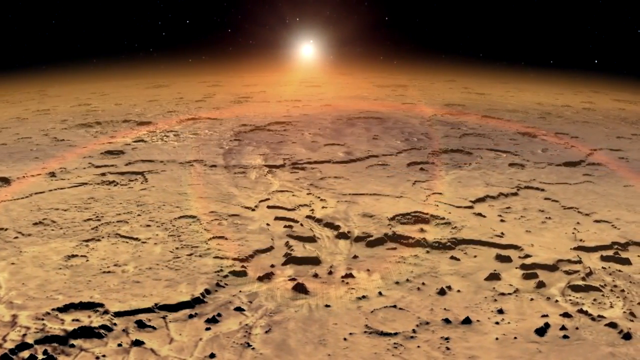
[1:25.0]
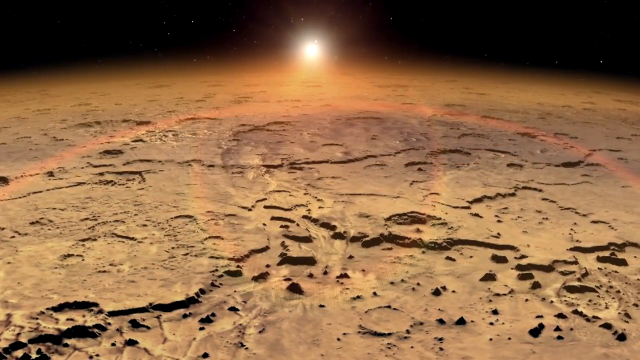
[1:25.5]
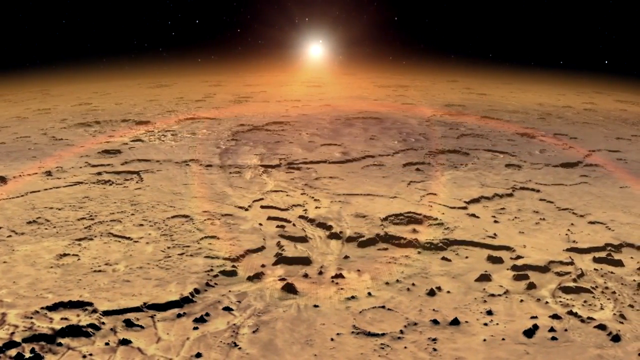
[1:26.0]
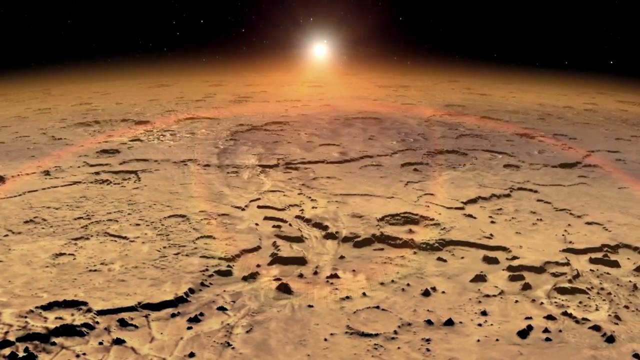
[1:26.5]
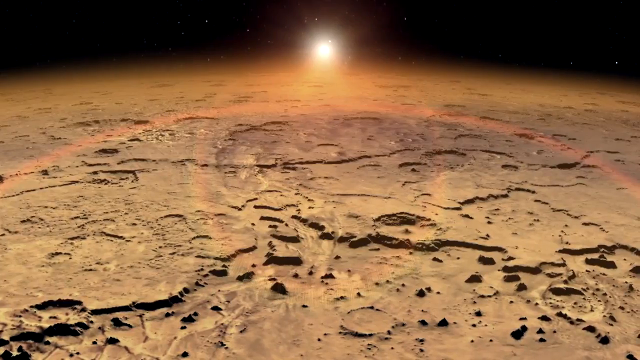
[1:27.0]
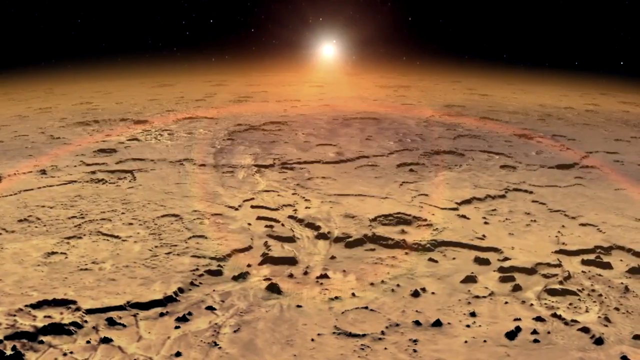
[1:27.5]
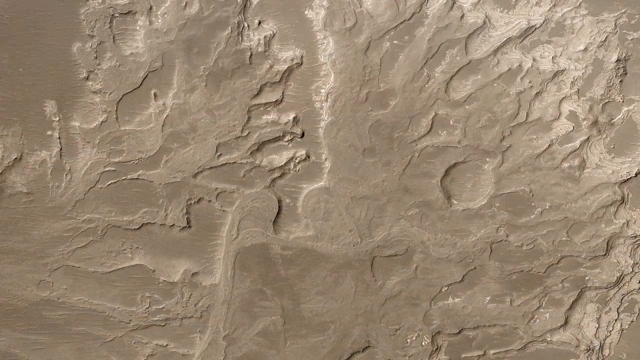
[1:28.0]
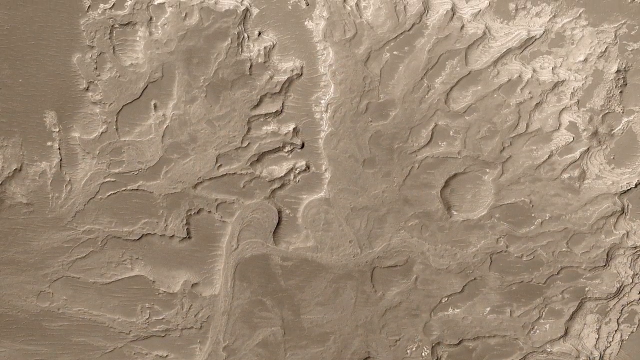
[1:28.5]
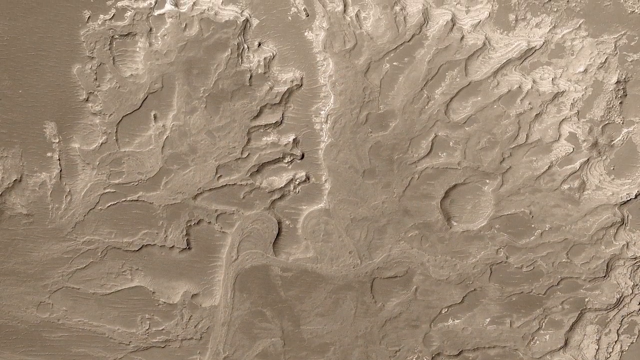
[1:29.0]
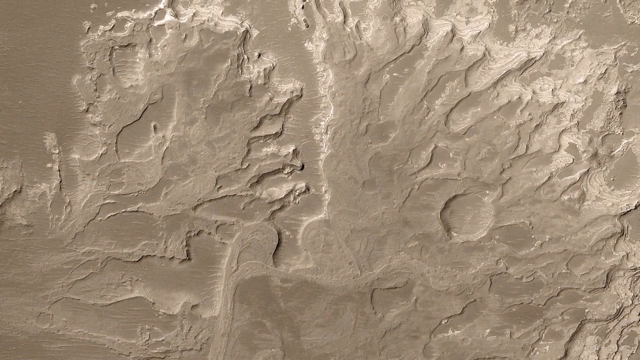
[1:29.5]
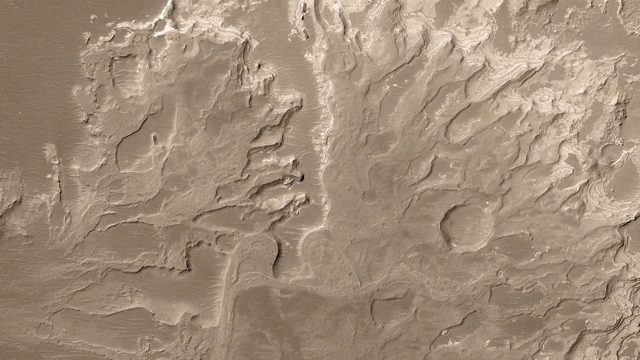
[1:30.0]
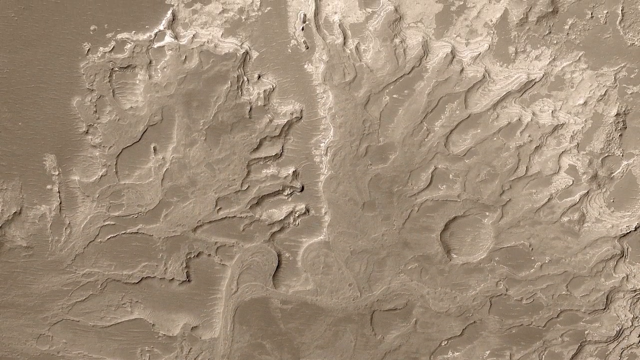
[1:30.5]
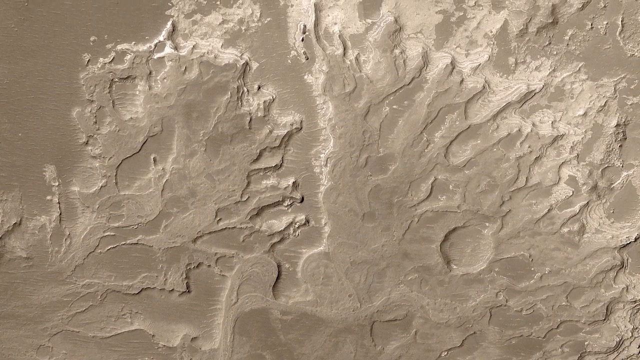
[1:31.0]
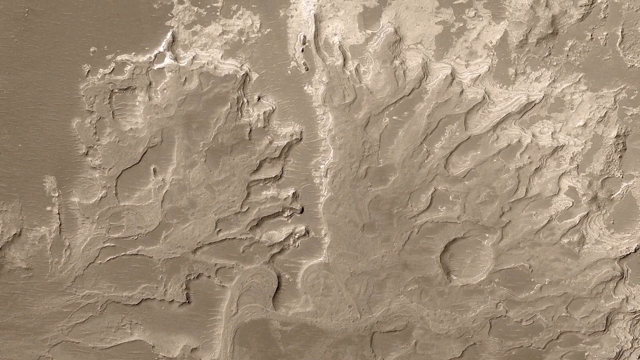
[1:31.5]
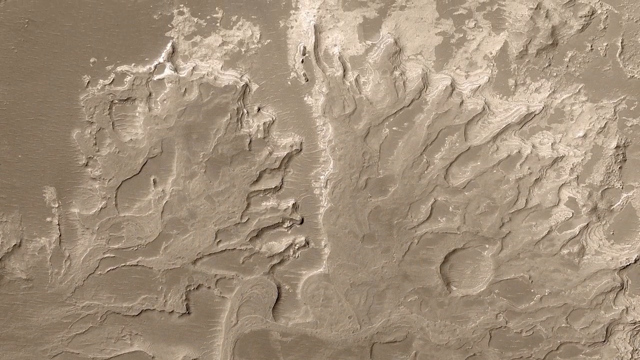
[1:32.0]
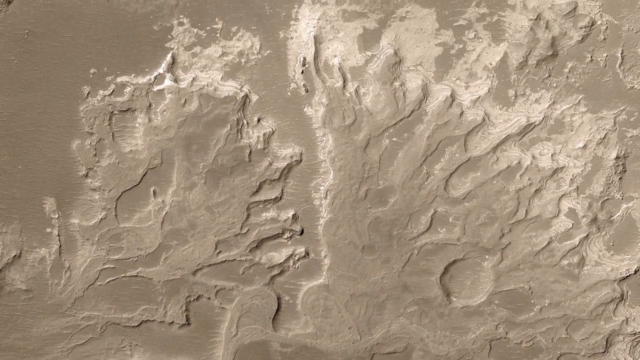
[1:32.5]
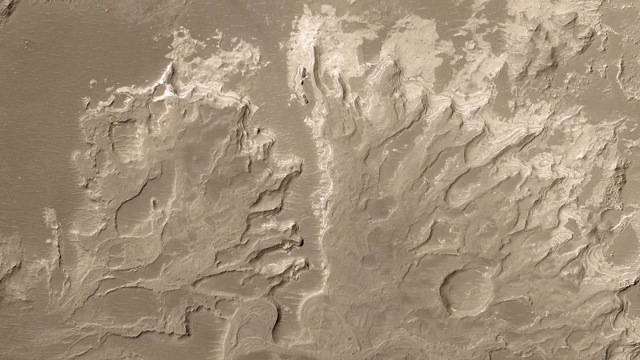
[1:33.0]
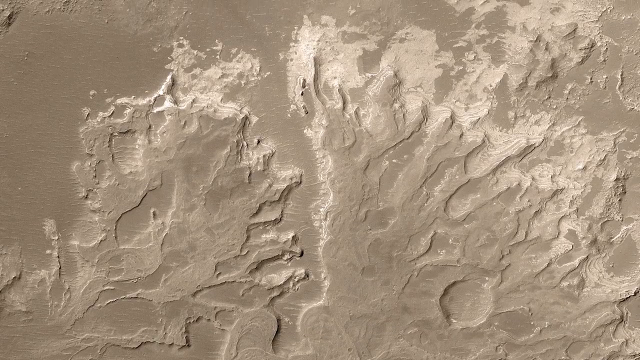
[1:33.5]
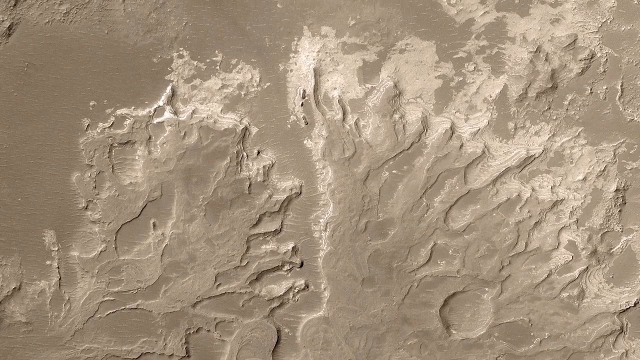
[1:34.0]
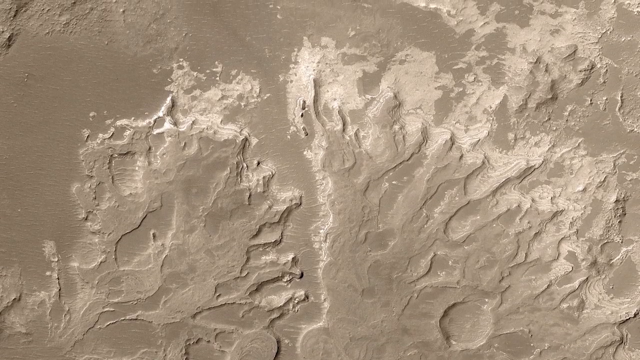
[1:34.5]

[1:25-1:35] A view of the planet Mars shows its reddish rust-colored surface, with what looks like the sun in the back and a black sky; the view seems to be traveling over the surface of Mars. The scene shifts to a direct image over the top of Mars, with a crater at the bottom and ridges, hills or other shapes in the surface. The image keeps panning, and it appears to be a far-up top view of Mars.